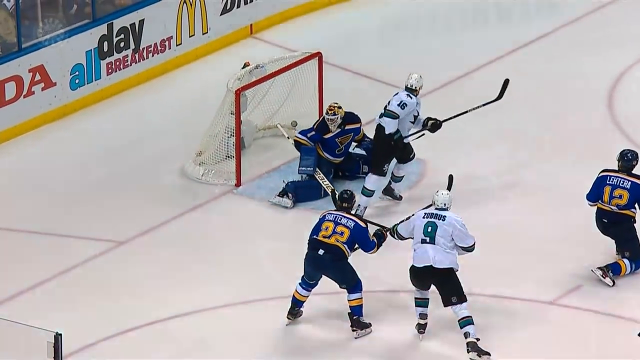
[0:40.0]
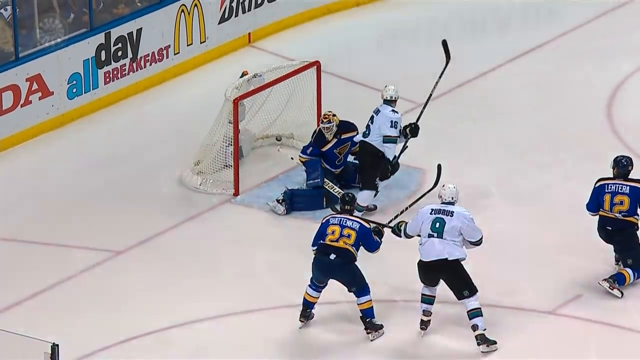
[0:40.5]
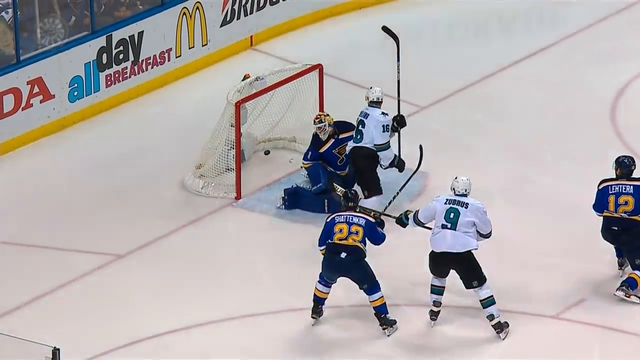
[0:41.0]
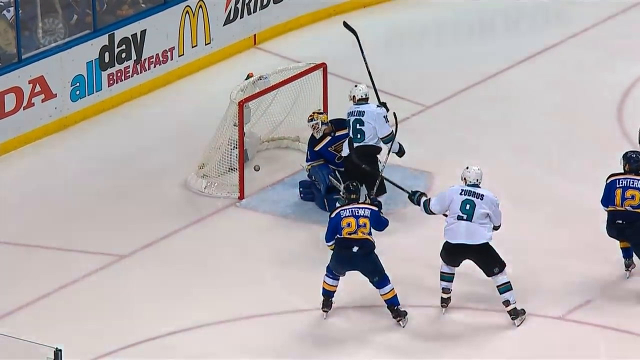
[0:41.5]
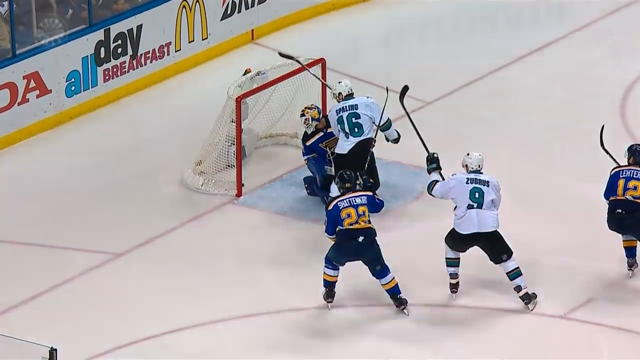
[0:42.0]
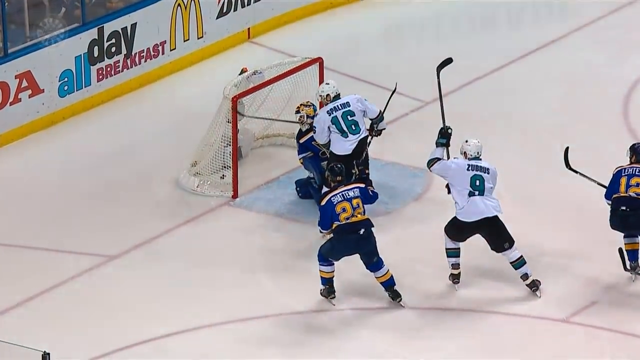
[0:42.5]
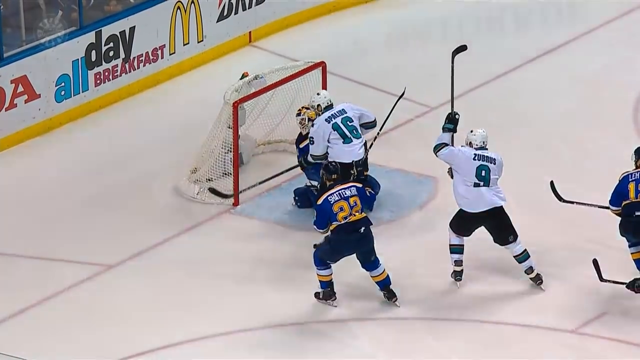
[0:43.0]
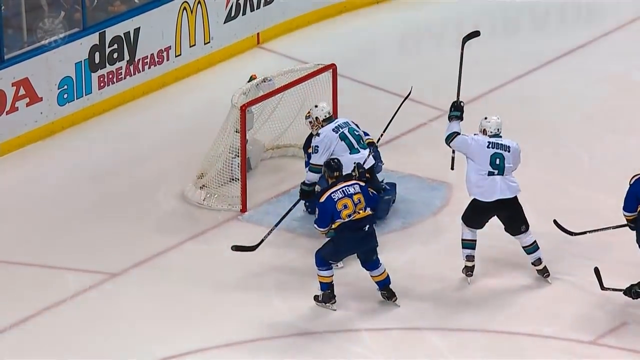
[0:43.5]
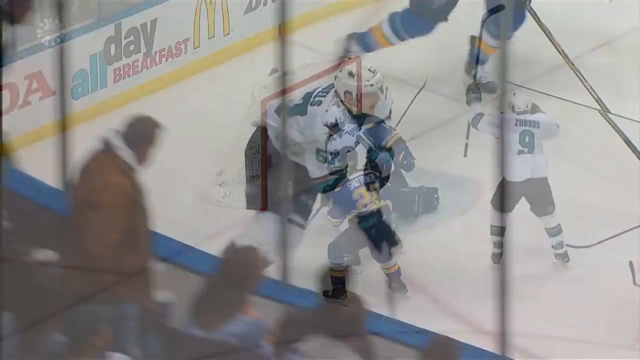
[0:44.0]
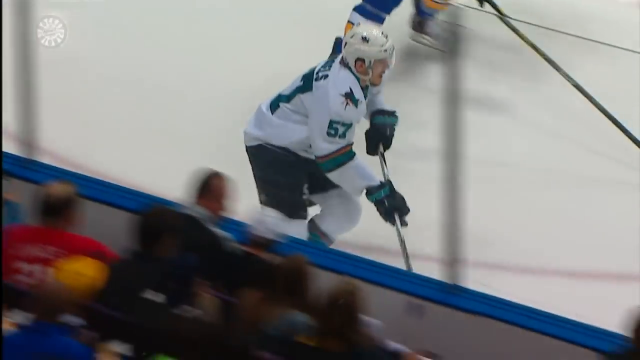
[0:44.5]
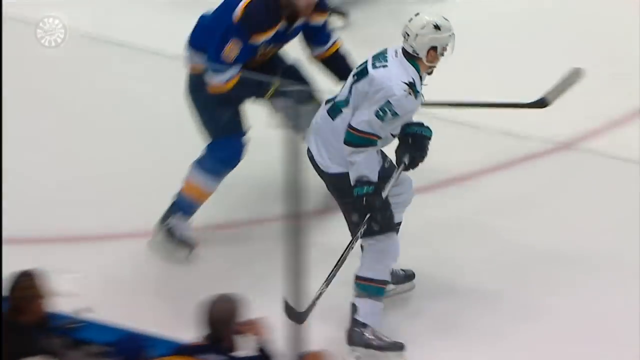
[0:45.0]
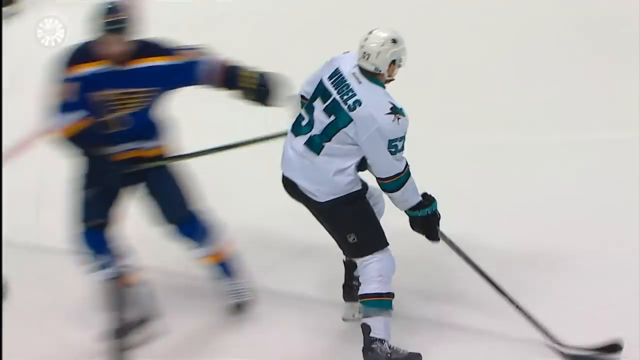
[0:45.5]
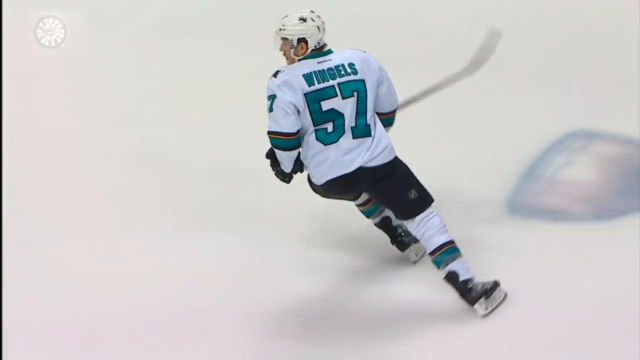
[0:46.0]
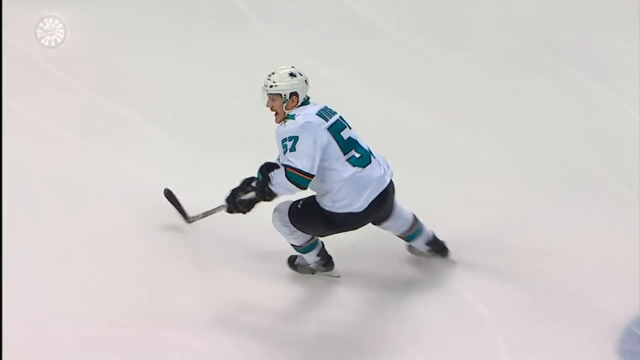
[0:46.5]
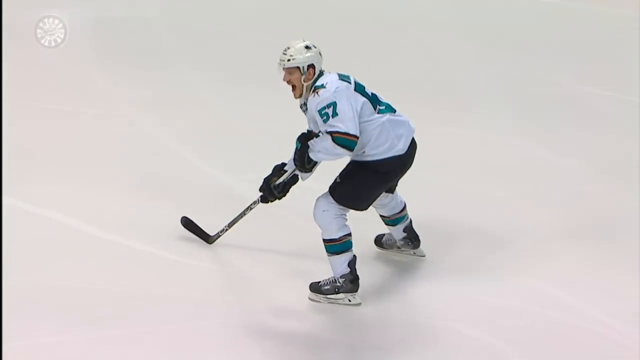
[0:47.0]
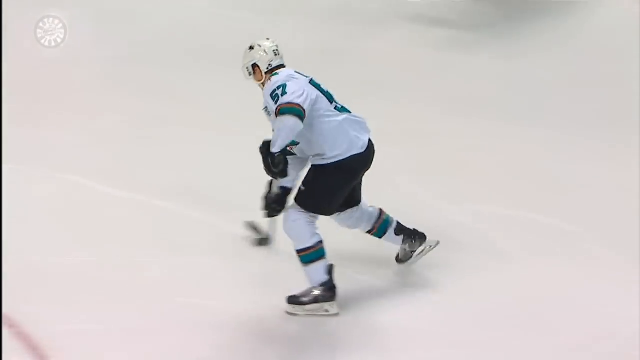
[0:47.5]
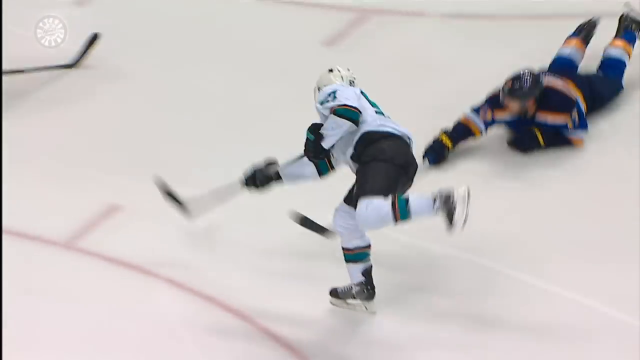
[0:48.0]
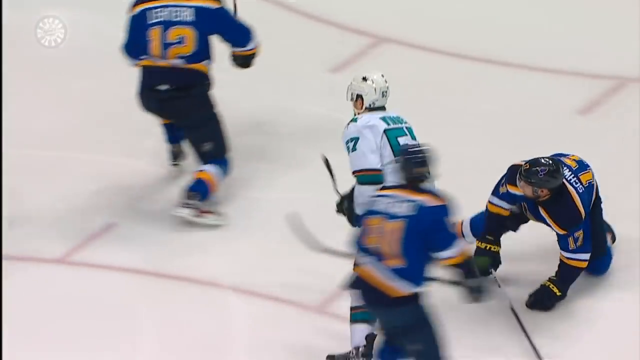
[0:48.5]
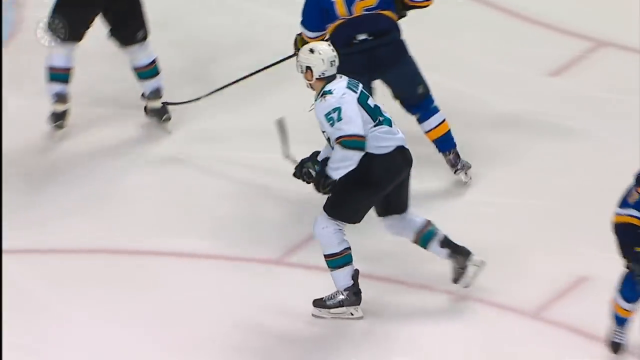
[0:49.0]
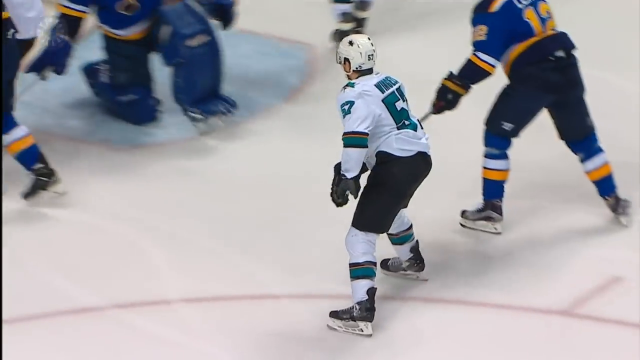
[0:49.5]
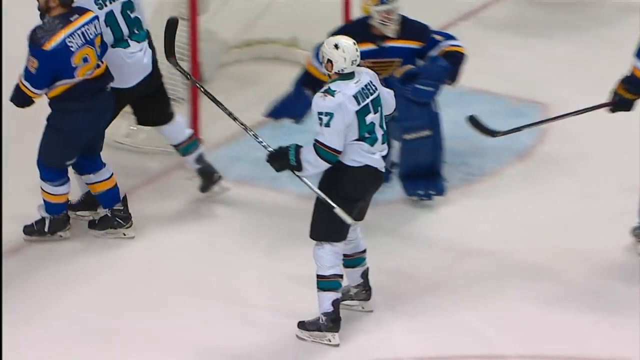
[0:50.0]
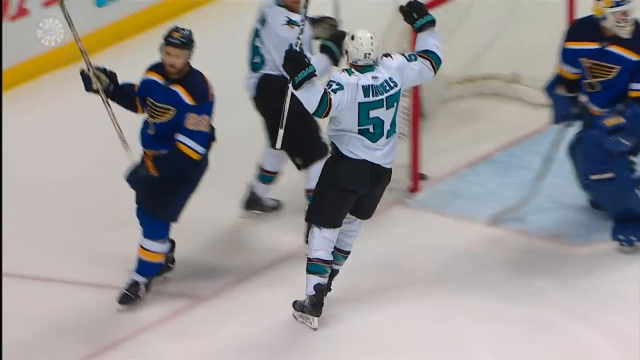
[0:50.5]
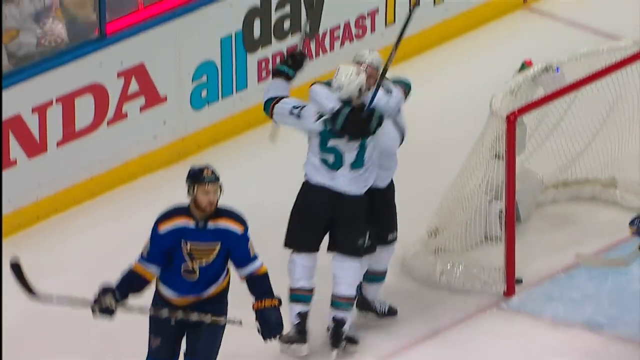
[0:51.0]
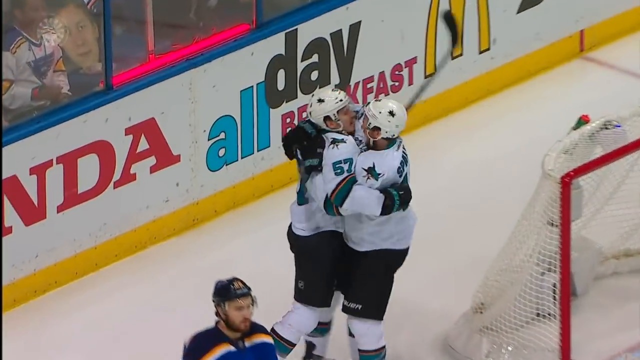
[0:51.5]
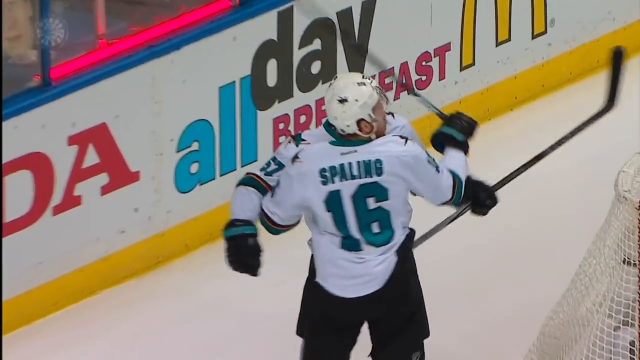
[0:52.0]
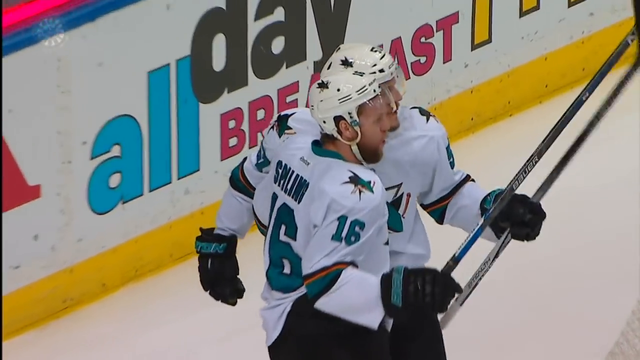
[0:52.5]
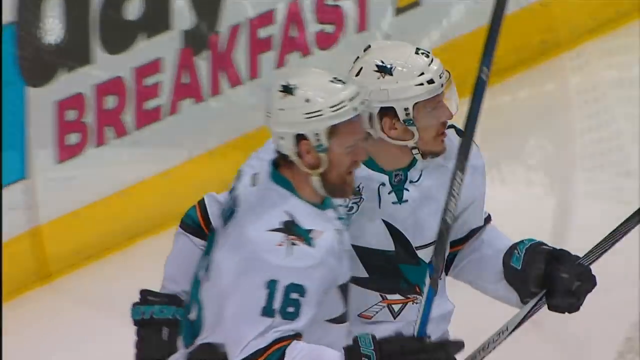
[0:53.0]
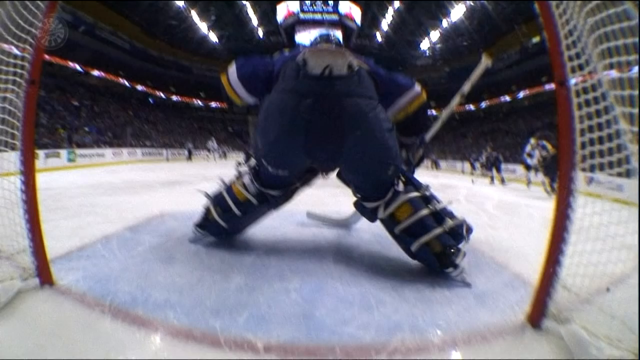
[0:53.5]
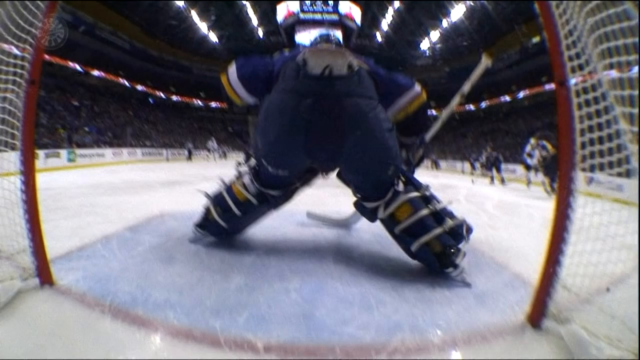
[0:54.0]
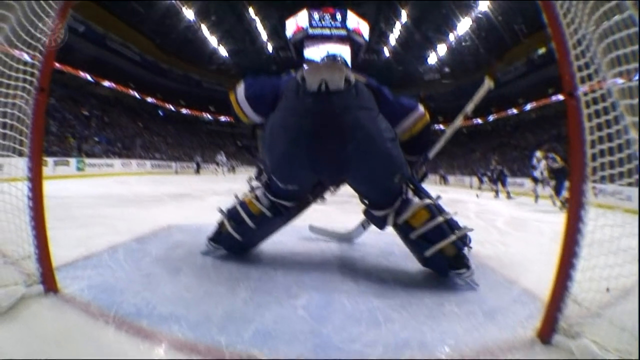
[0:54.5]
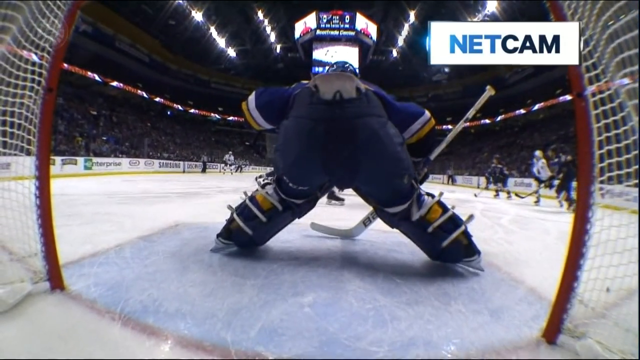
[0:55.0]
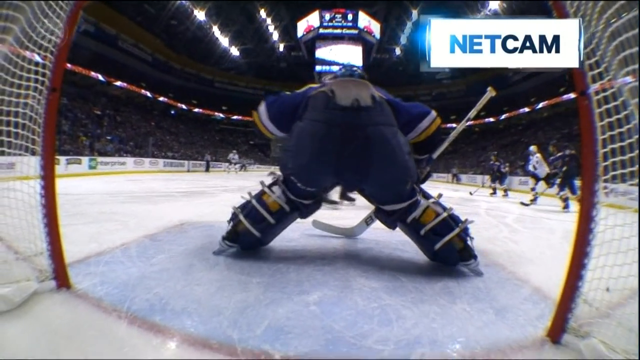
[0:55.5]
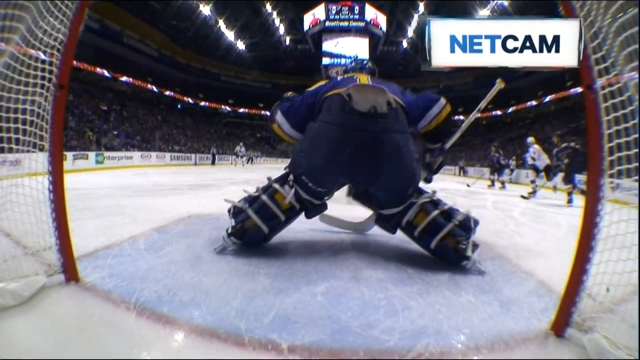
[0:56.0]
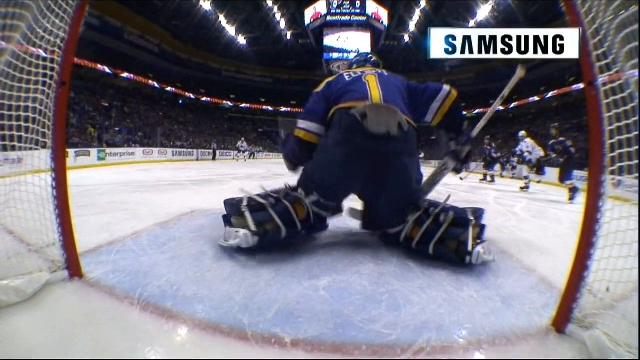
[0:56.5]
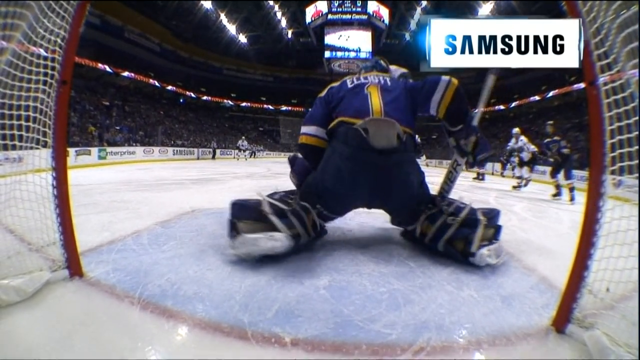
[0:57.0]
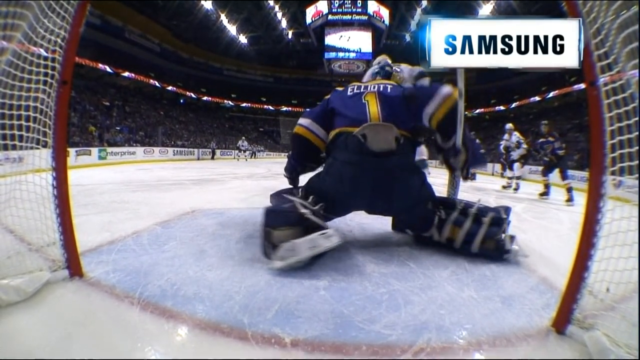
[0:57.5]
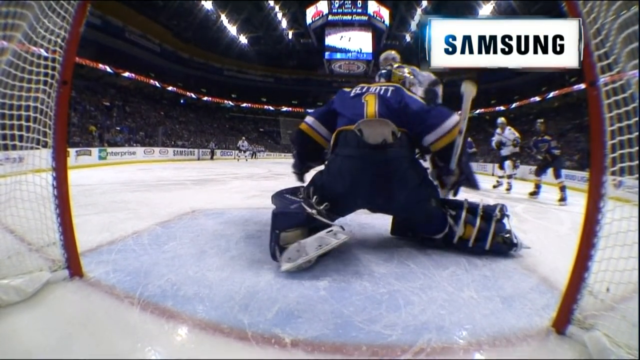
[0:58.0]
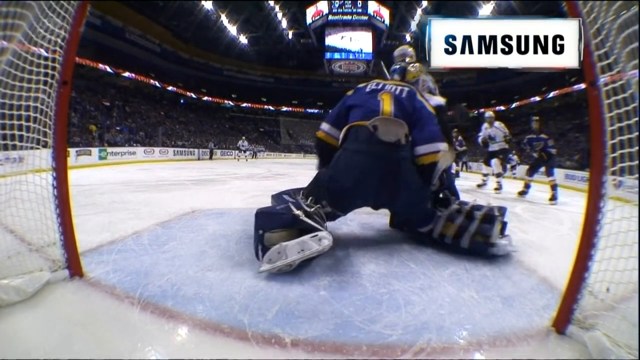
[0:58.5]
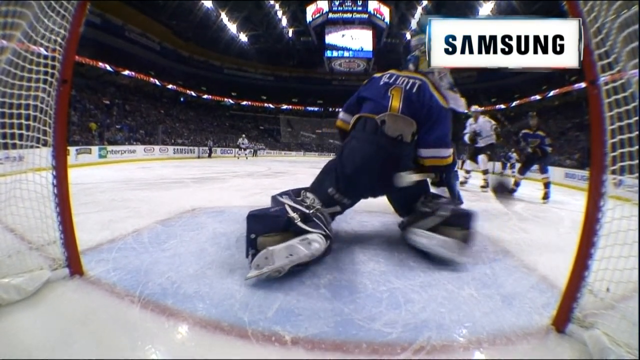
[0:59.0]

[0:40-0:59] A McDonald's advertisement reads "all day breakfast." The ice on the rink is white, and there is a goal with a net and a red pipe outline. The person at the center is a goalie with his knees kind of on the ice. A player in front of him skates up and toward the right, a player below, apparently number 22, skates forward, the player on the right is number nine, and another is number 12. The footage plays in slow motion, with some light flickering from the slow motion. The view switches to number 57 swinging around; someone passes the puck from off screen, left to right, and he shoots it. Two people hug each other. The angle changes to a net cam from inside the net, with "Samsung" at the top right. The goalie gets down and the puck comes in, and he is not able to catch it in time. The view changes to more celebrations by people with the shark logo on their jerseys, then back to the net cam, where the goalie is on his knees and the puck comes in from the right side; he apparently was not able to see it.